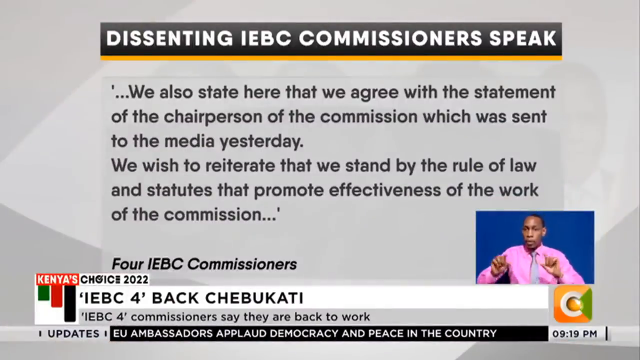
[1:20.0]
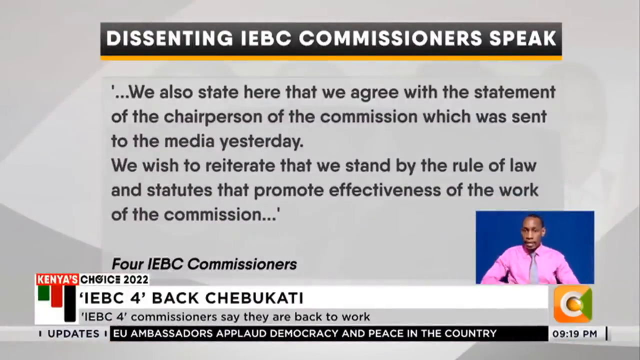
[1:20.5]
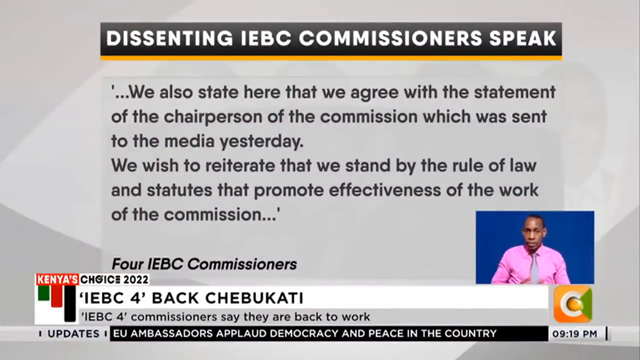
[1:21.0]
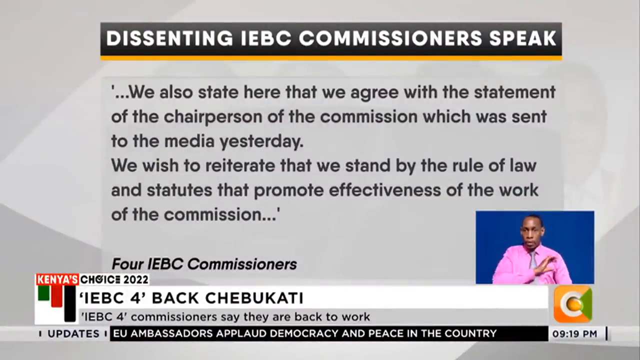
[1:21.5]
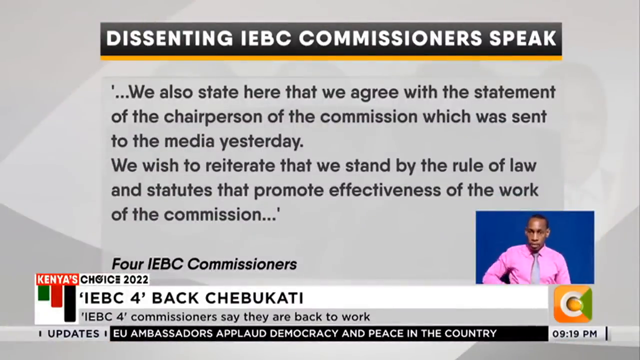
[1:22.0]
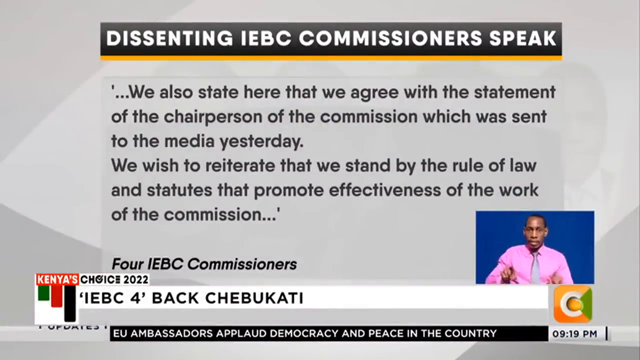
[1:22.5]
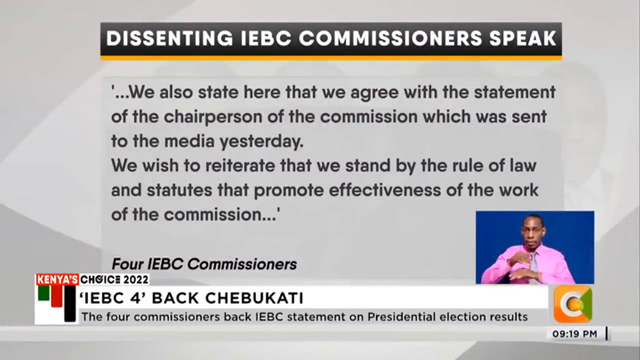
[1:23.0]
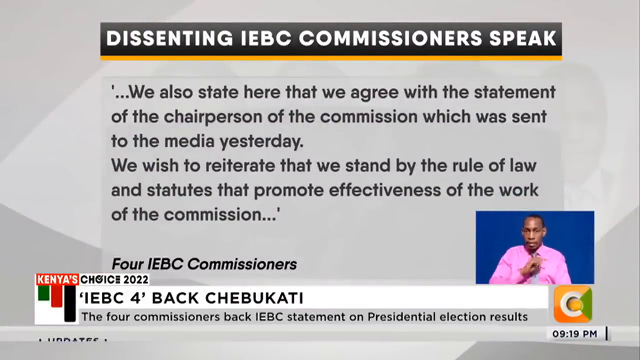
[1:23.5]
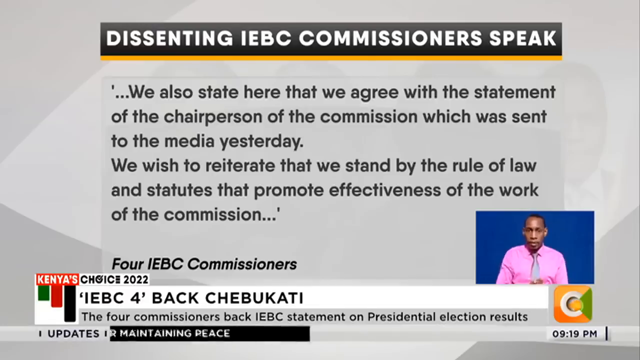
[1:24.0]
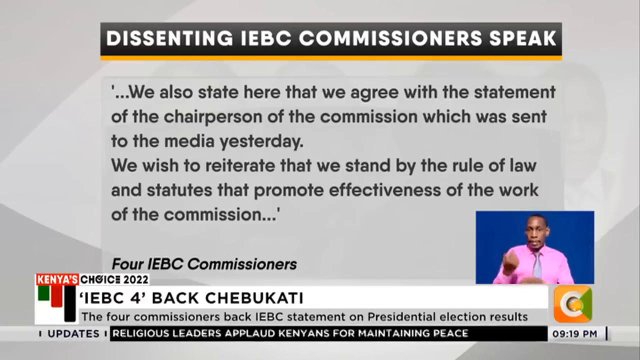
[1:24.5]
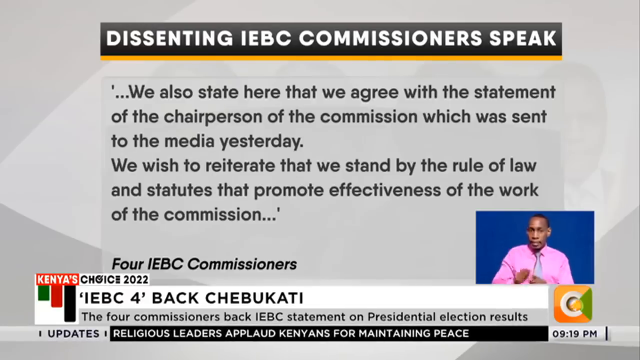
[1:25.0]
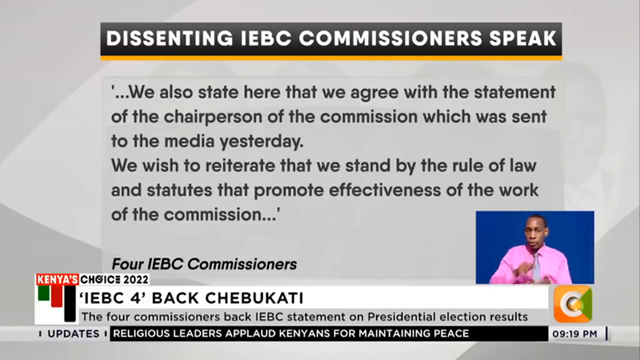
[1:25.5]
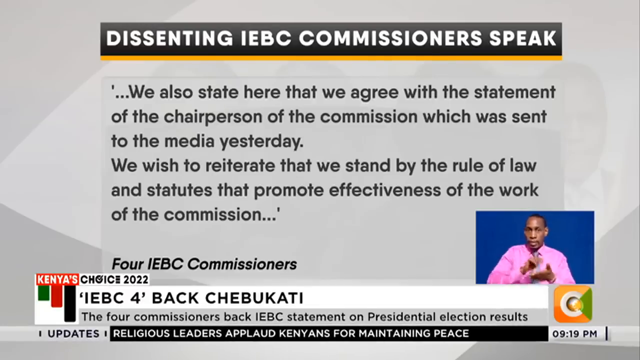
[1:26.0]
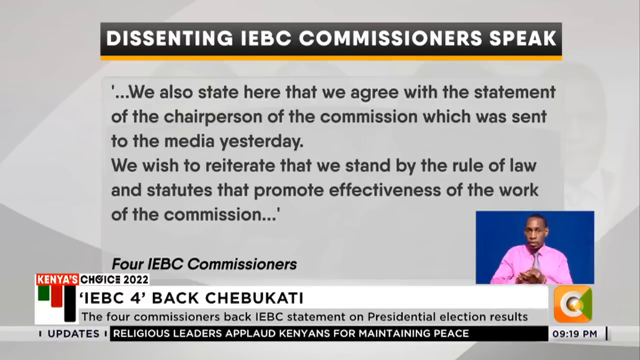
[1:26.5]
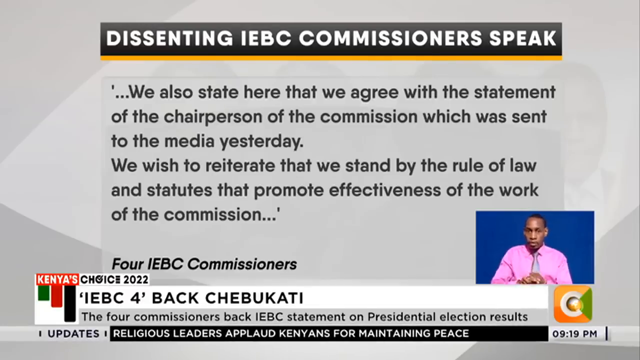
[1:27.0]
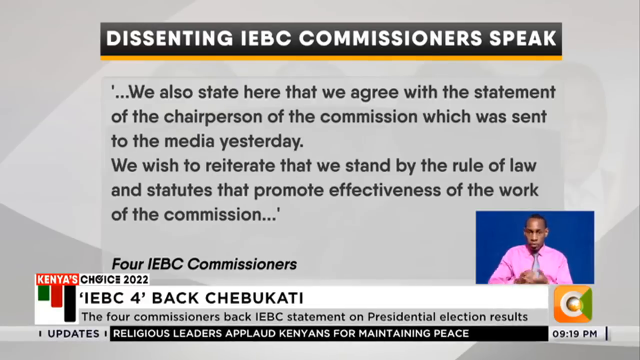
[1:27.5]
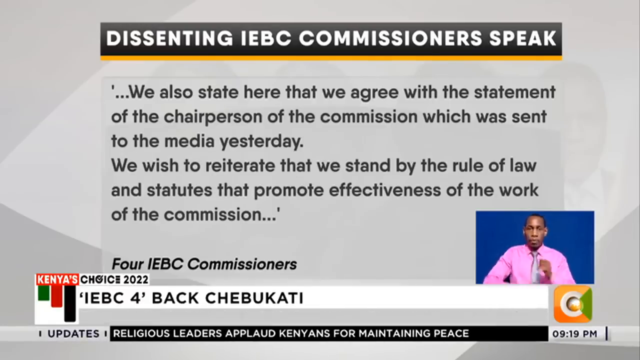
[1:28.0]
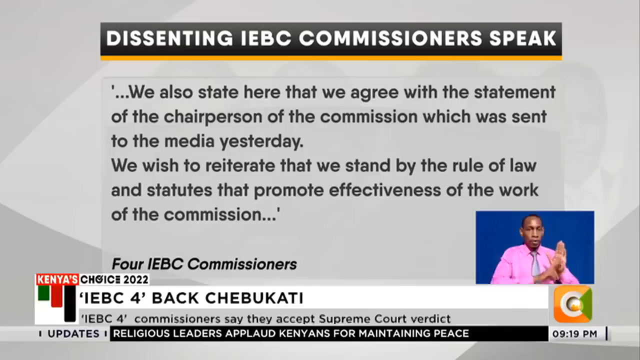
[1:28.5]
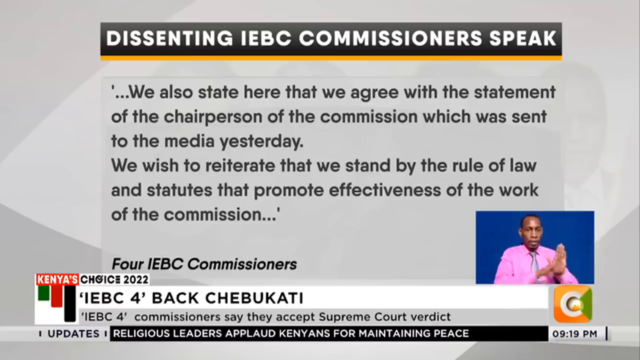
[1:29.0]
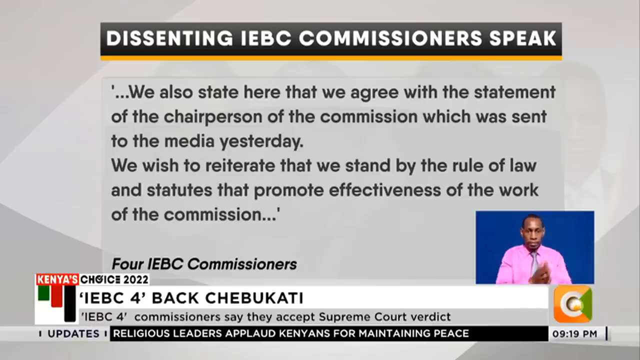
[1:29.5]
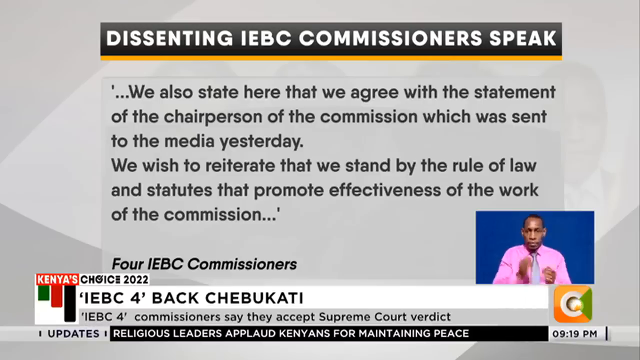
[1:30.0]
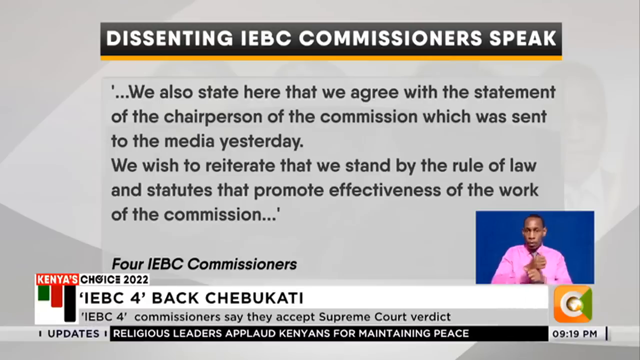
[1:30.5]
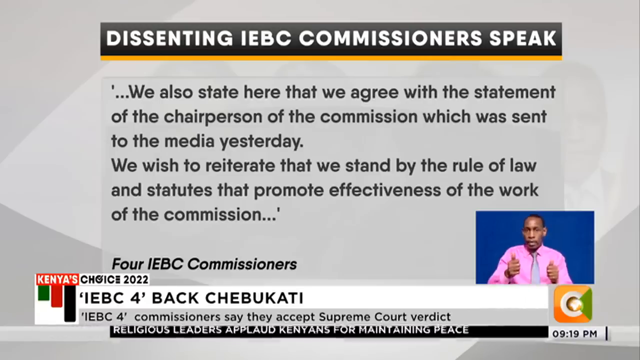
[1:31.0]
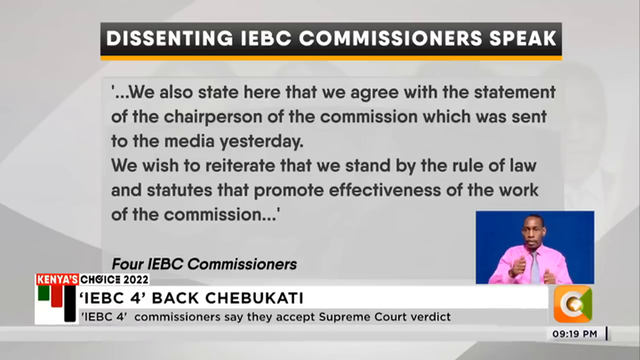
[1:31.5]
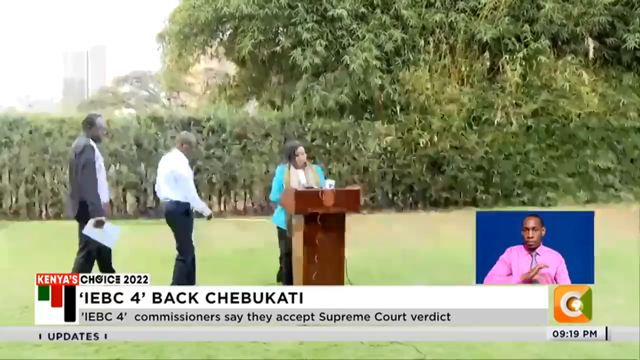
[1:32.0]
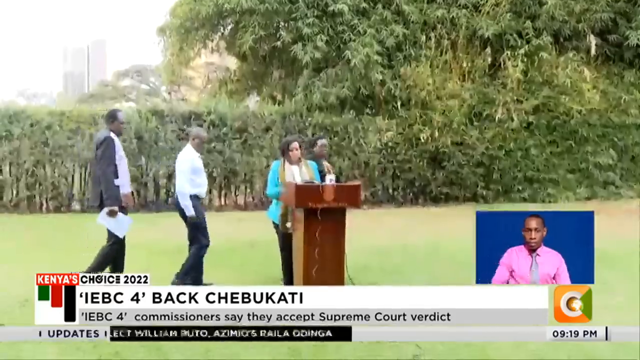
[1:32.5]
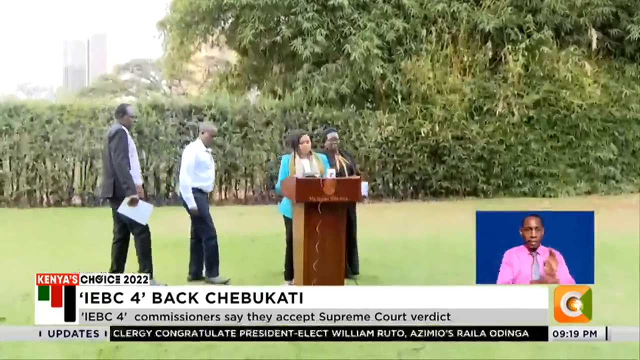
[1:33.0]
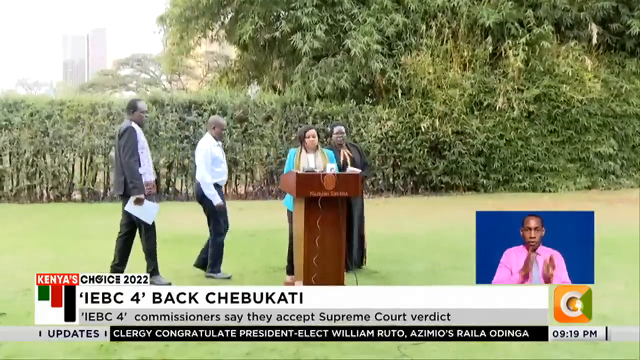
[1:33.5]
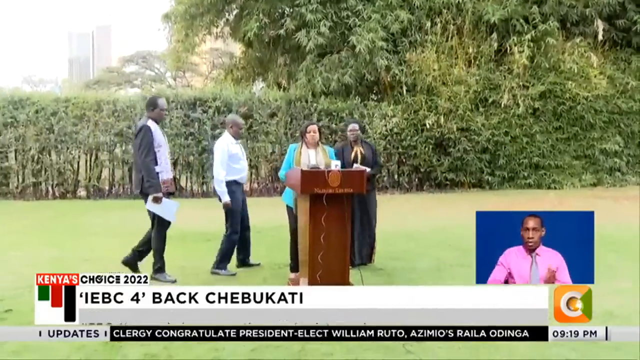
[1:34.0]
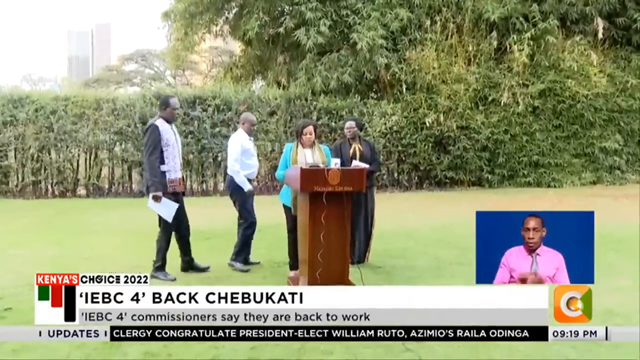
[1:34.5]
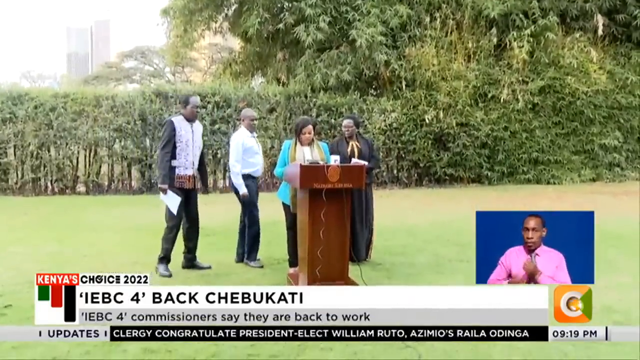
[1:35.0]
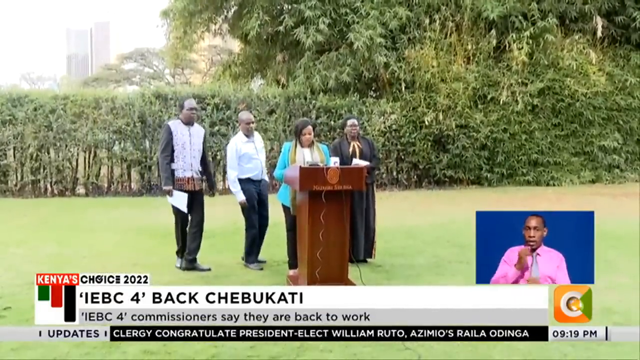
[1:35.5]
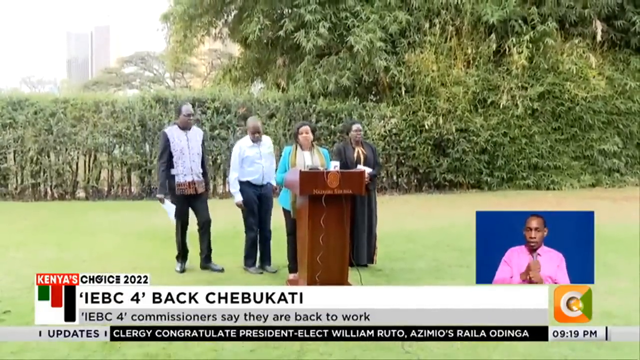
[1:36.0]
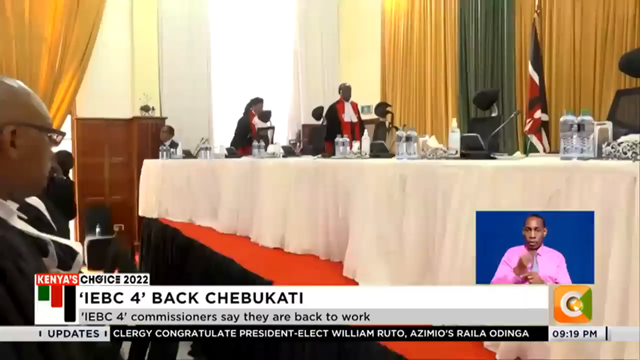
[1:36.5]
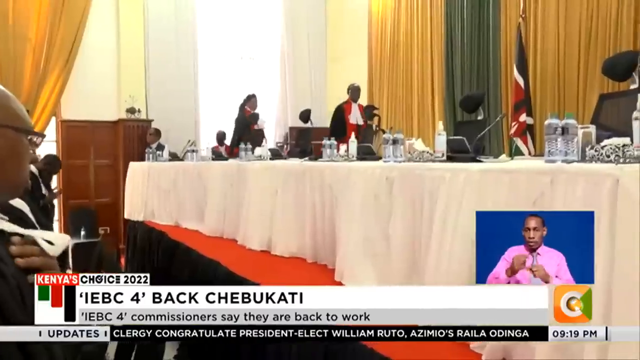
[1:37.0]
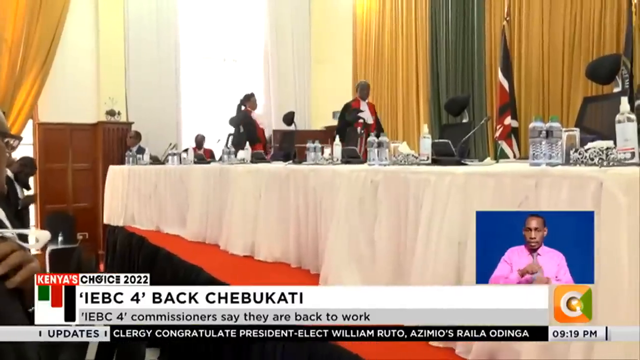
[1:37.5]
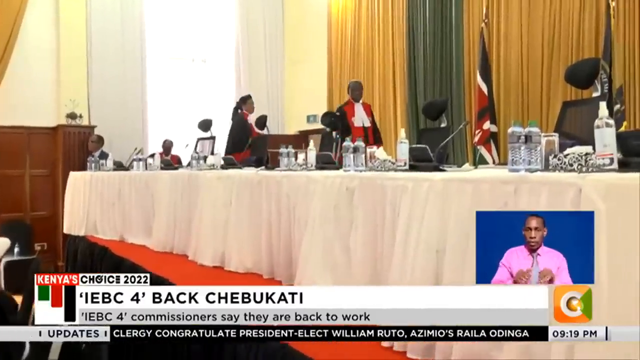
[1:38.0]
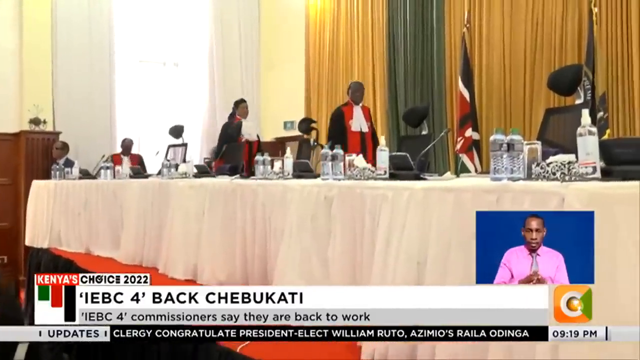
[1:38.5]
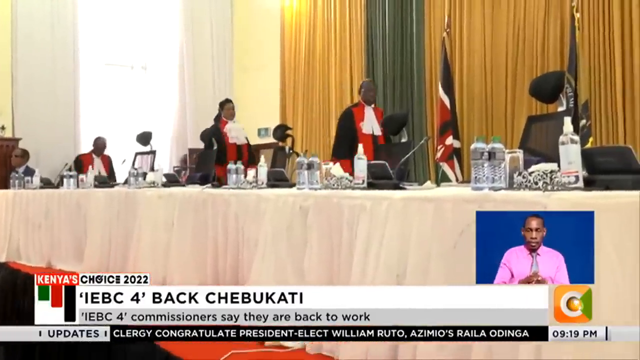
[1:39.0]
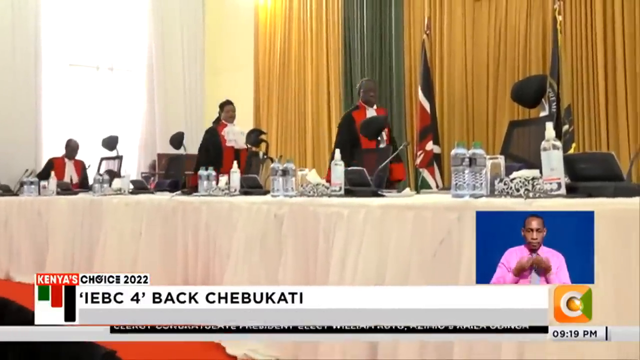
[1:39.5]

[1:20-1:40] The news report shows a quote from the four IEBC commissioners: "we also state here that we agree on the statement of the chairperson of the commission which was sent to the media yesterday. We wish to reiterate that we stand by the rule of law and statutes that promote effectiveness of the work of the commission." The report then goes back to footage of the four commissioners; instead of walking, they line up in front of an audience and seem to be standing together. Next comes footage of what looks to be the same people, all dressed alike in black robes with red scarves or sort of red vests, so they look color coordinated.